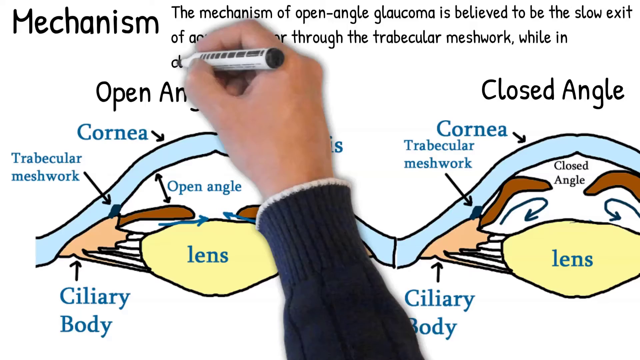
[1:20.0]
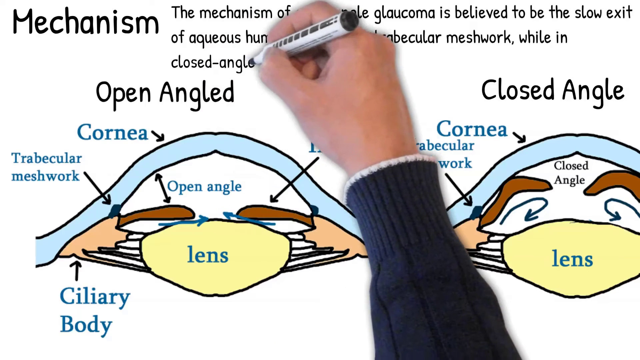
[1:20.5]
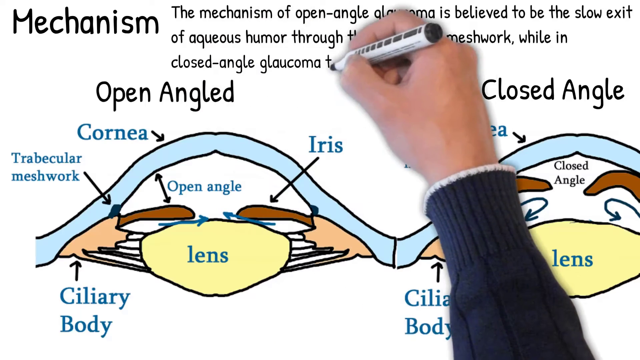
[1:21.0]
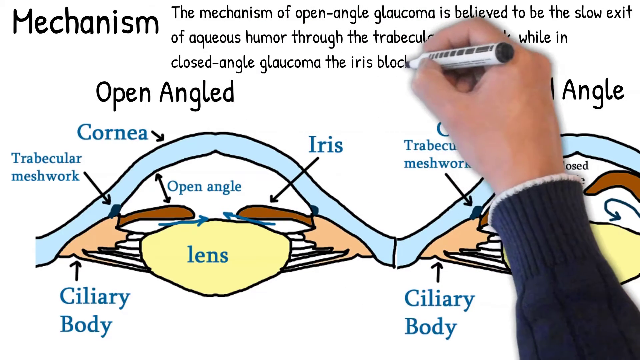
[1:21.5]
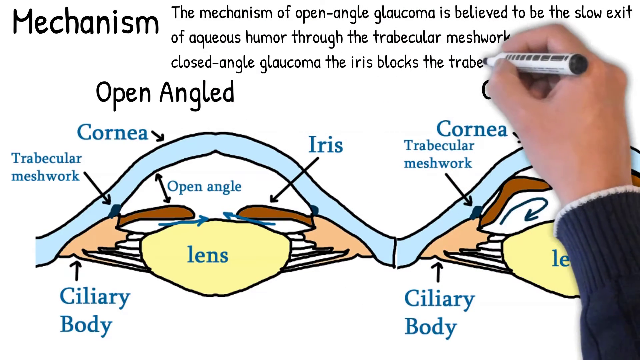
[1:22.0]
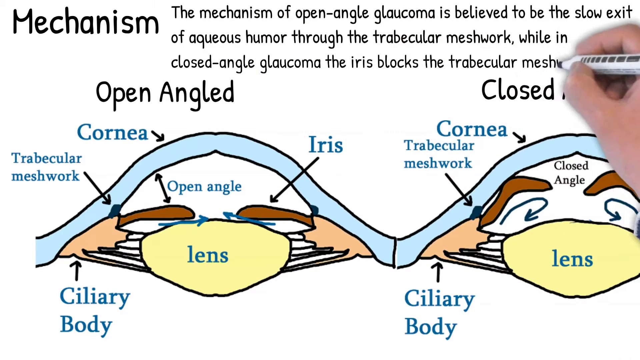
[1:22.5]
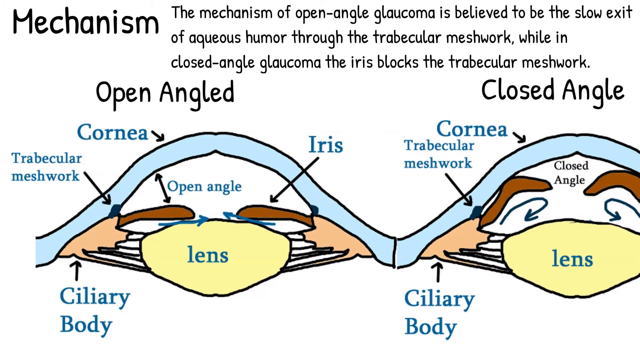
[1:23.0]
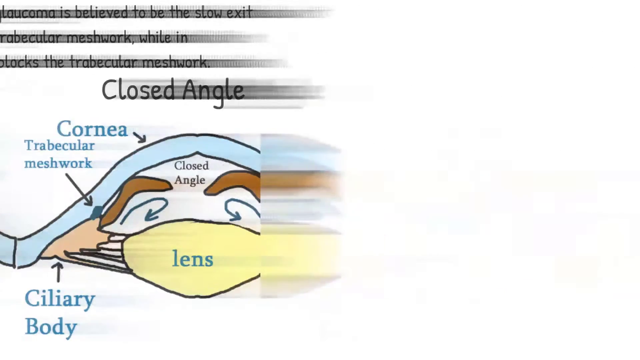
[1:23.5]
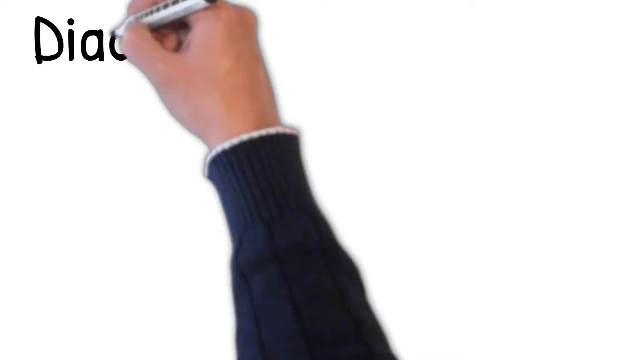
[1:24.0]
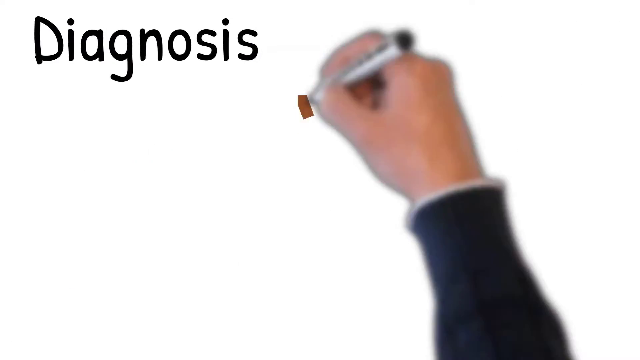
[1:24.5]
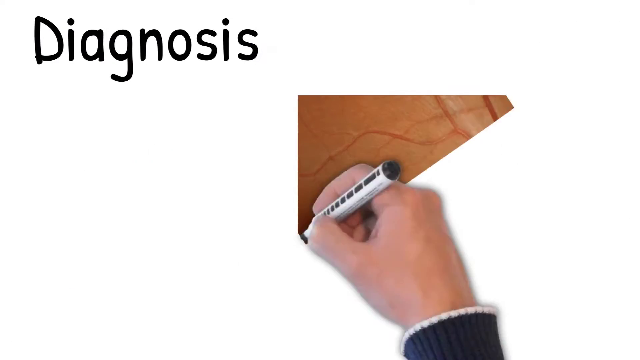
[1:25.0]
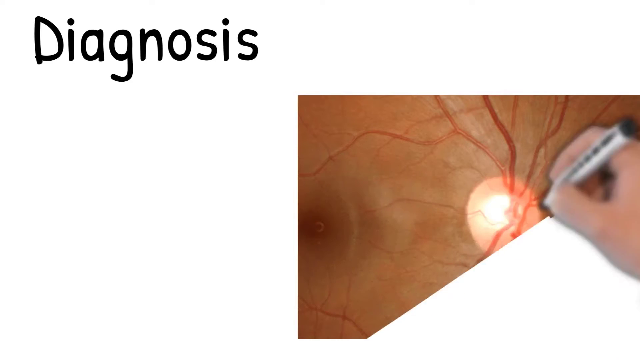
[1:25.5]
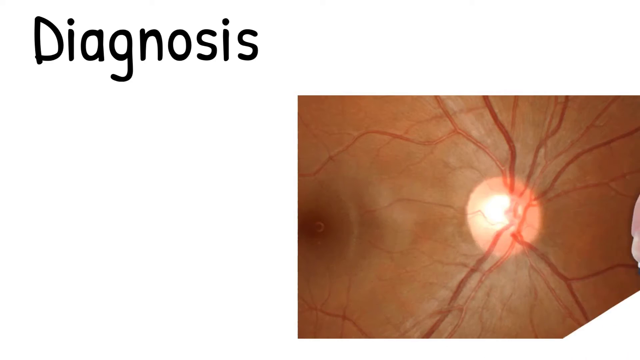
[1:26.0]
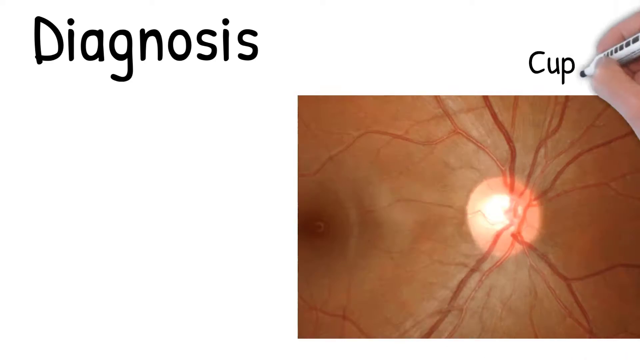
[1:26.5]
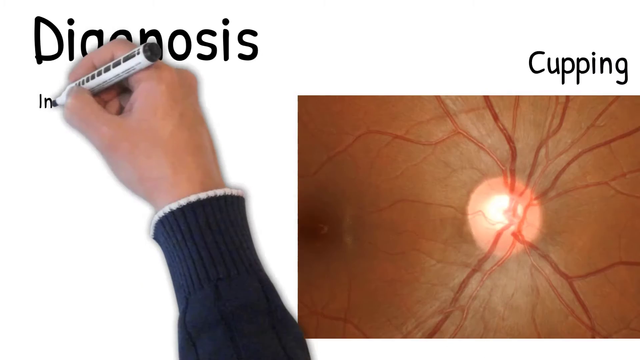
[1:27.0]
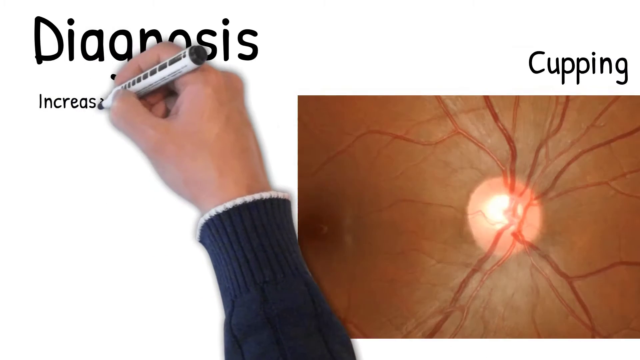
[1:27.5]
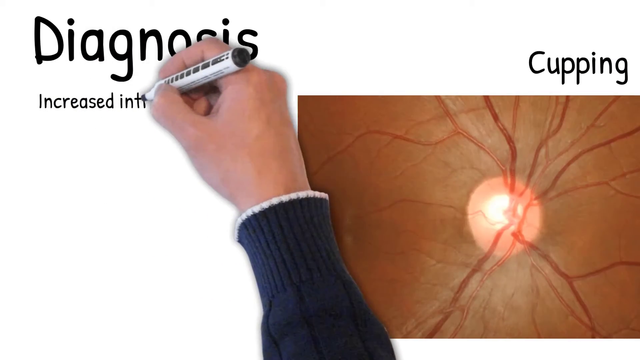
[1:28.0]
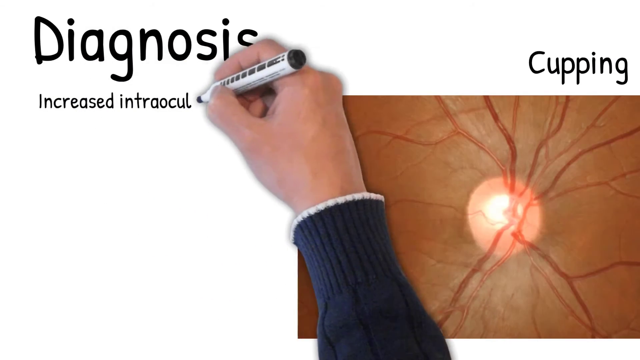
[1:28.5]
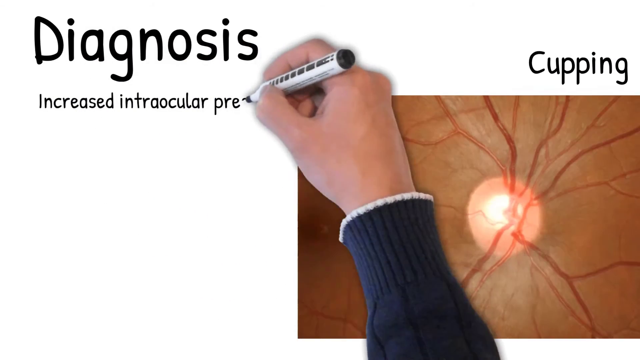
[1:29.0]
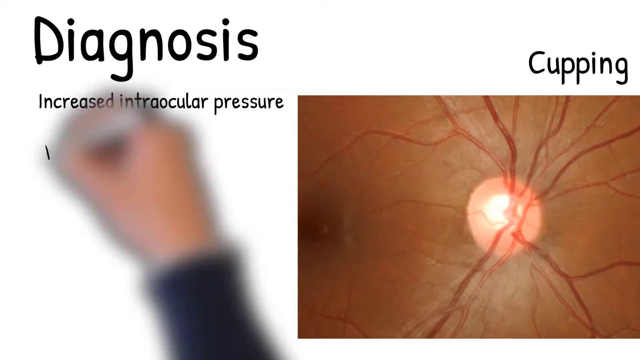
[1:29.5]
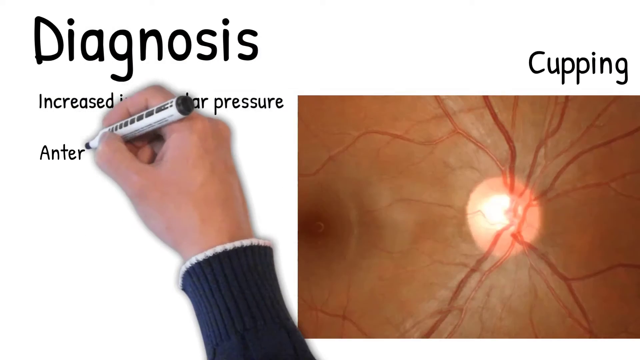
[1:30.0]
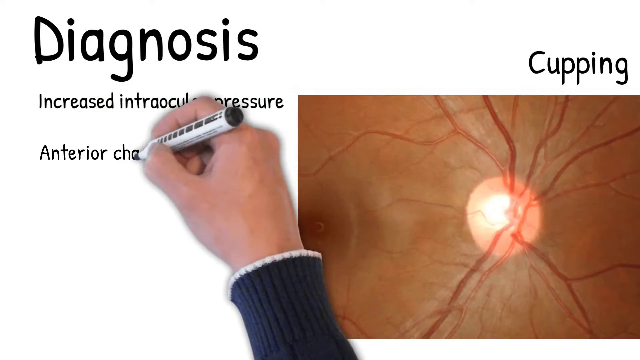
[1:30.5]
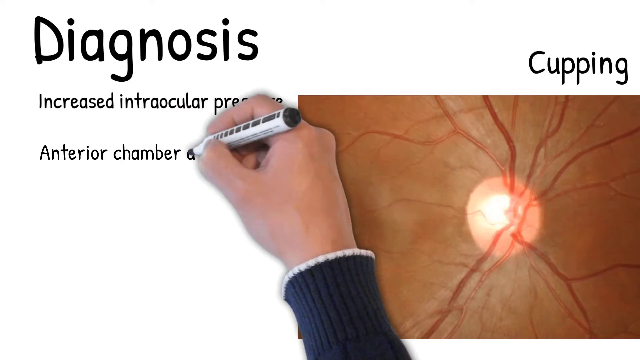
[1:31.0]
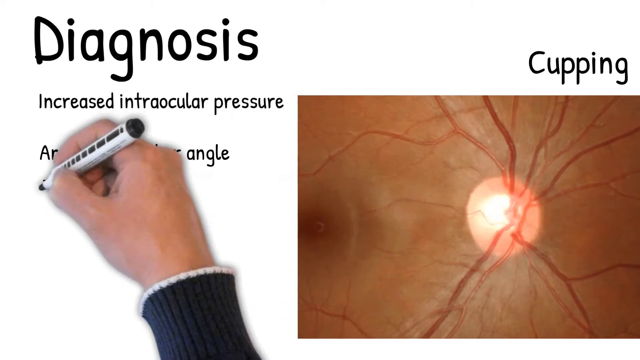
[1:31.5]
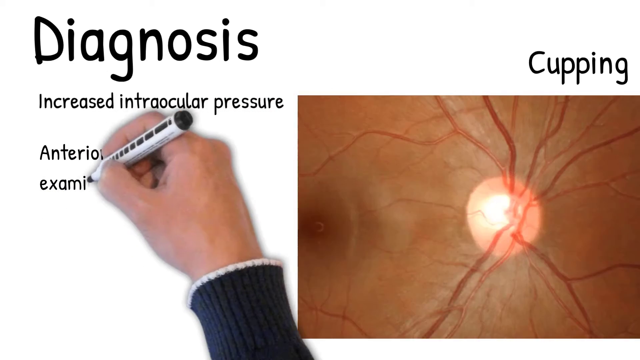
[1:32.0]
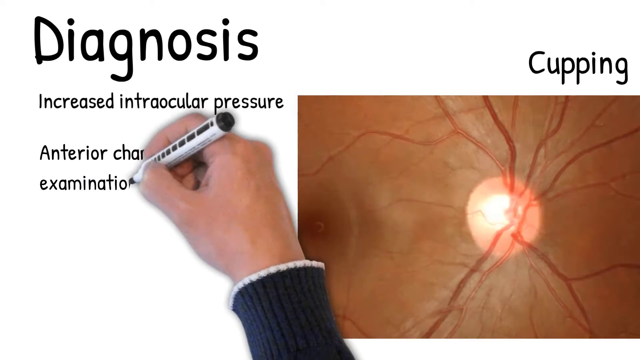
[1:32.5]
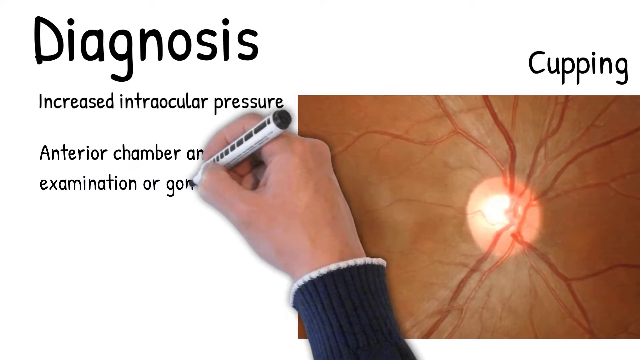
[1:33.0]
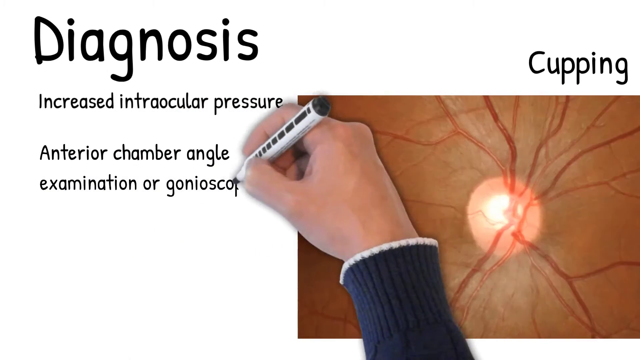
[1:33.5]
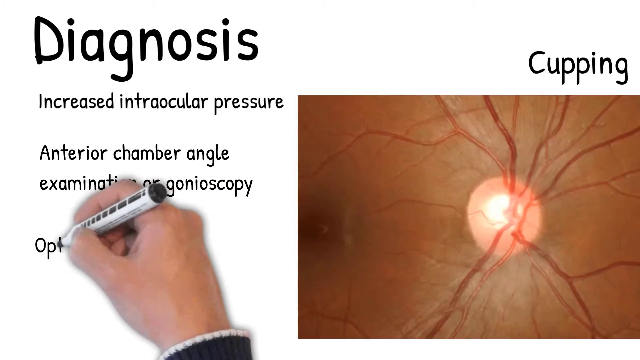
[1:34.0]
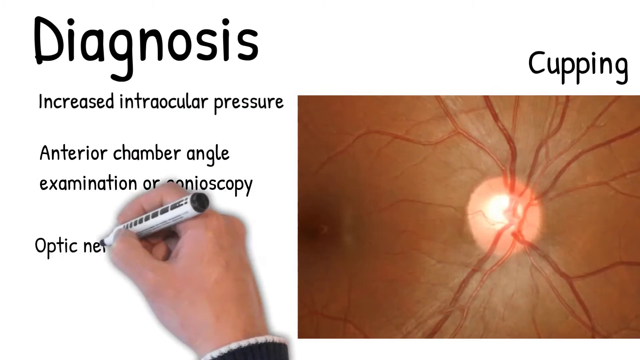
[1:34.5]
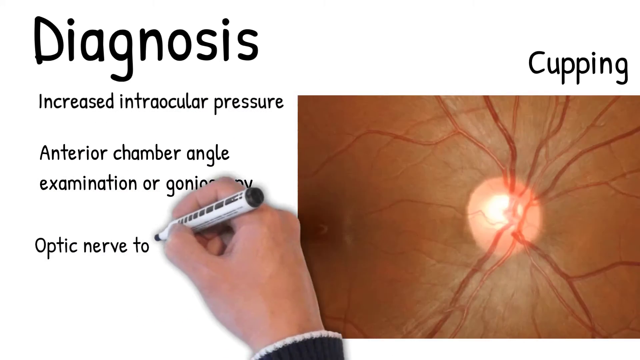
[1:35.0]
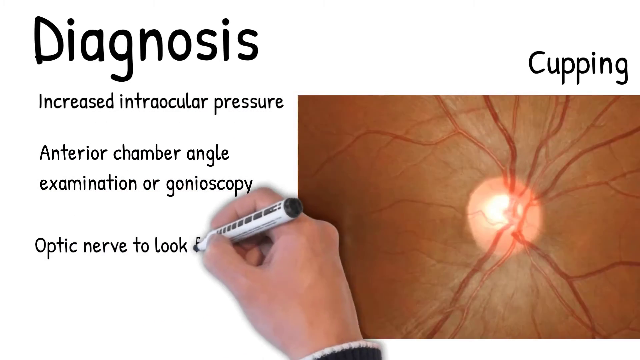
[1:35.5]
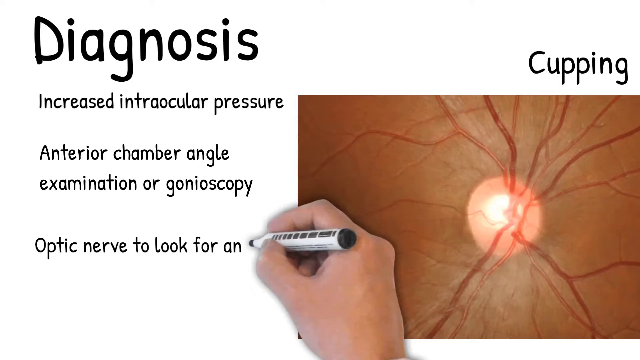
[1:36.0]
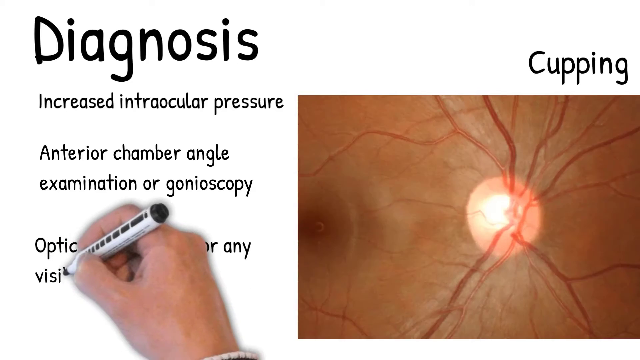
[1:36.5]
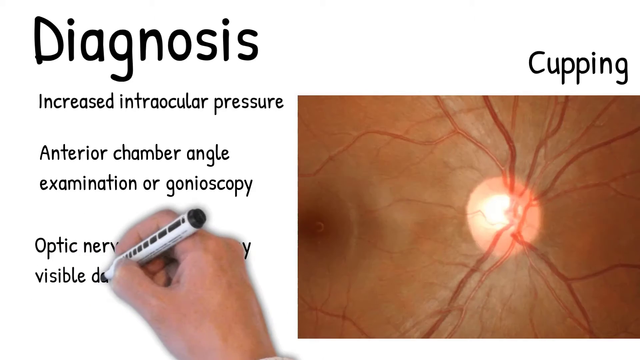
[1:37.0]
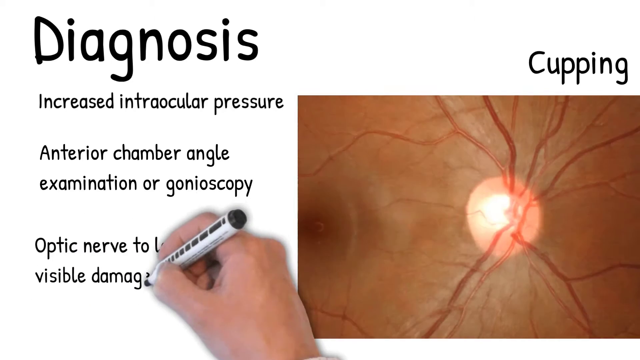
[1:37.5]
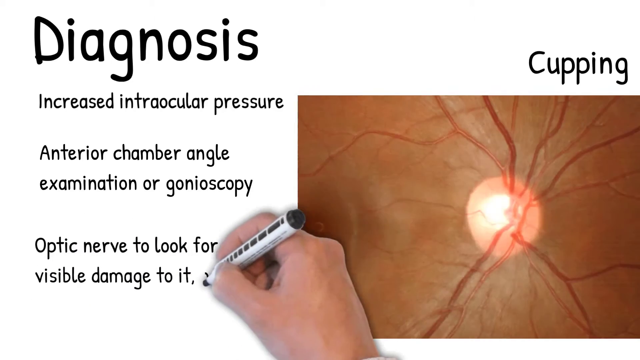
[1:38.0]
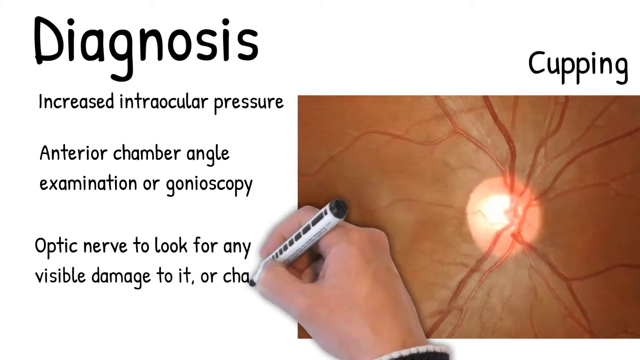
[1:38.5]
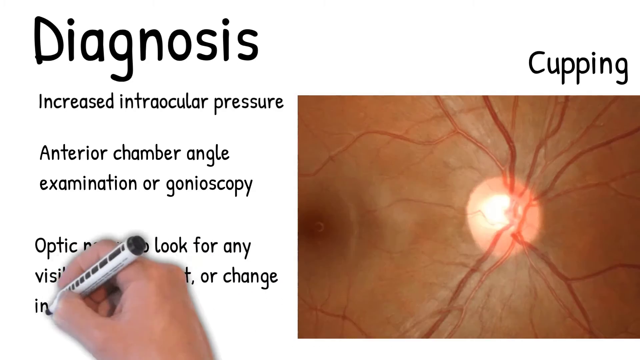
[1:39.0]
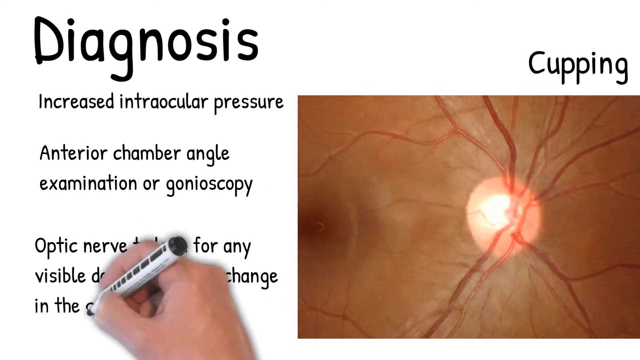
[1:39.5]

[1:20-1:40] The pen continues writing: "while in closed angular glaucoma, the iris blocks the trabecular meshwork". The diagram shows an open-angle glaucoma example on the left and closed angle on the right. The screen moves to a new page. In the top left, the white male hand with a blue sleeve writes the word "Diagnosis". It moves to the bottom right of the screen and seems to sketch a picture of the back of an eye with veins, with the iris visible. Above this diagram it writes the word "Cupping". Back on the left-hand side of the page, the pen writes "Increased intraocular pressure", a line ending "angle examination or gonioscopy", and "Optic nerve to look for any visible damage to it or change in the", and then the pen runs out of space. The page covers diagnosis on the left, with an example image on the right-hand side.